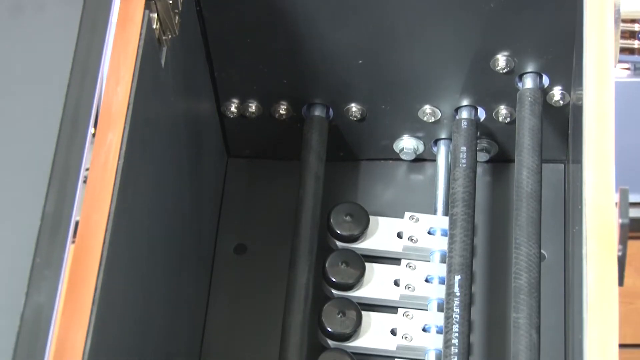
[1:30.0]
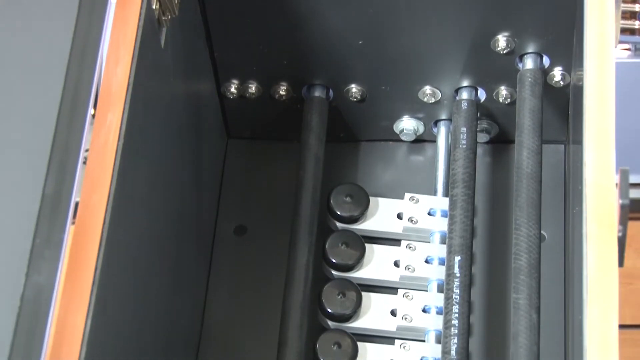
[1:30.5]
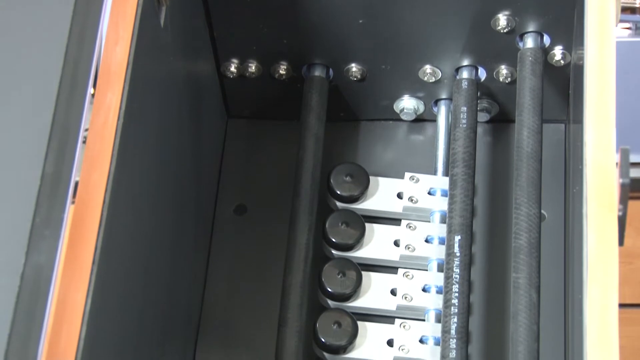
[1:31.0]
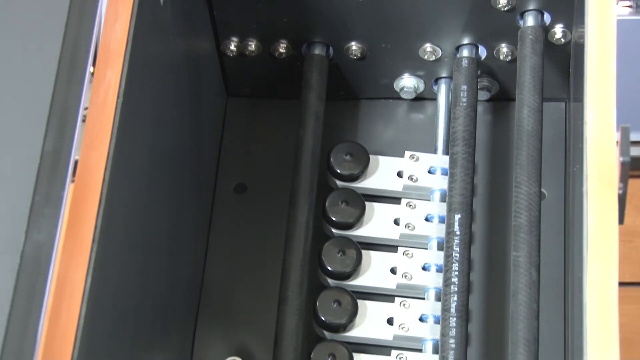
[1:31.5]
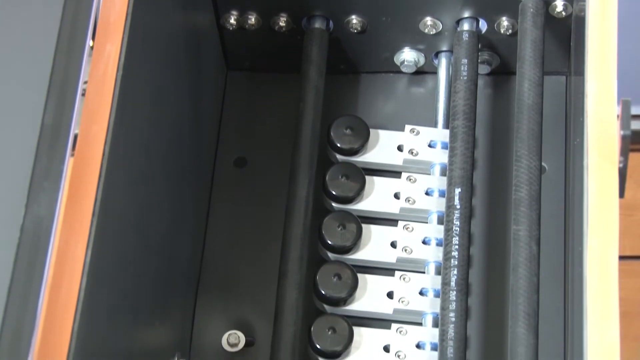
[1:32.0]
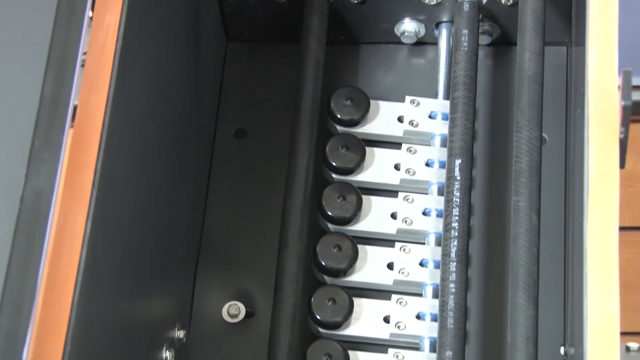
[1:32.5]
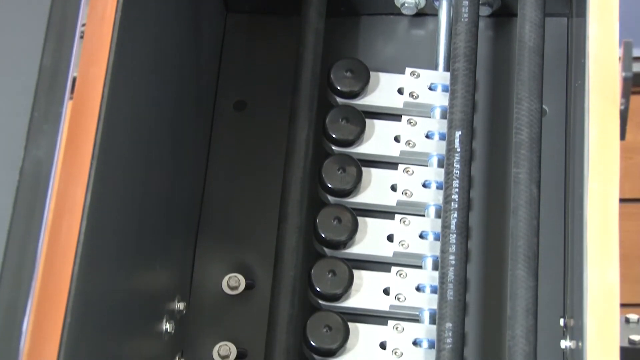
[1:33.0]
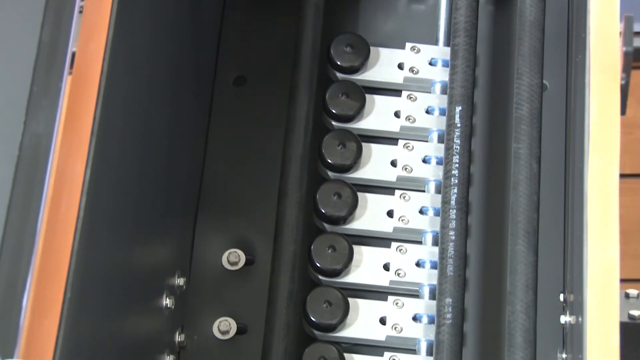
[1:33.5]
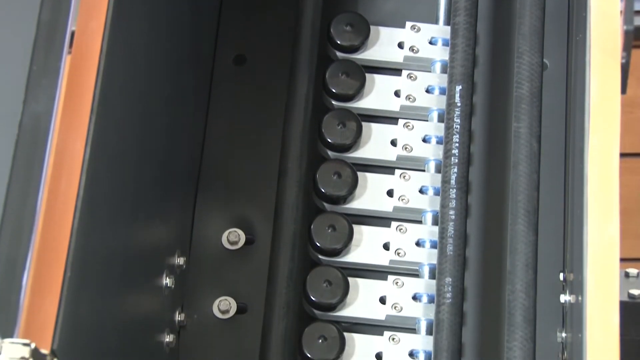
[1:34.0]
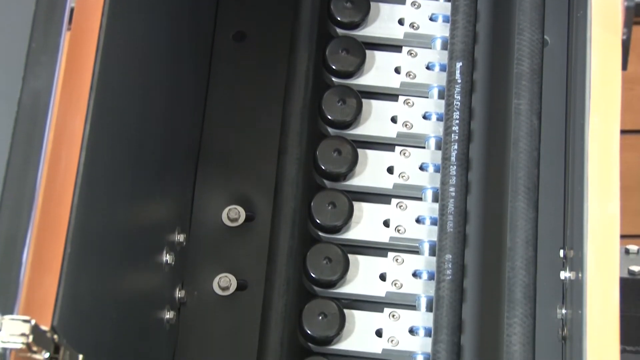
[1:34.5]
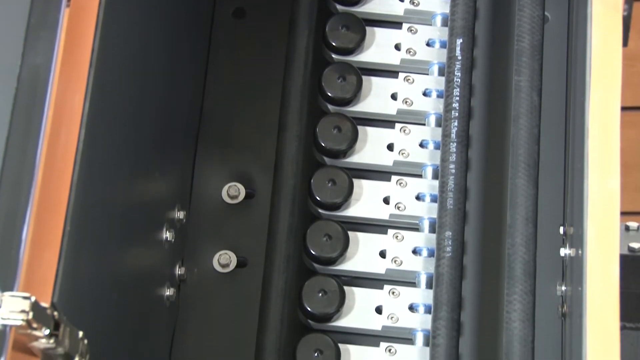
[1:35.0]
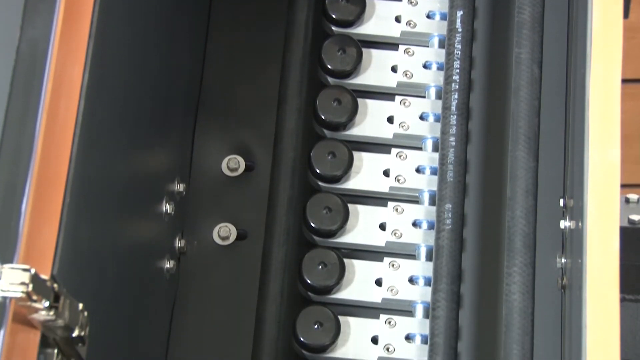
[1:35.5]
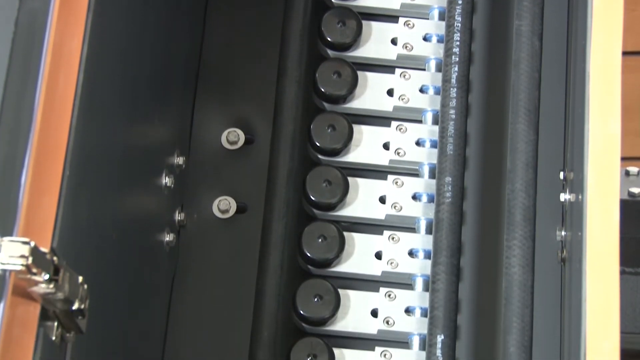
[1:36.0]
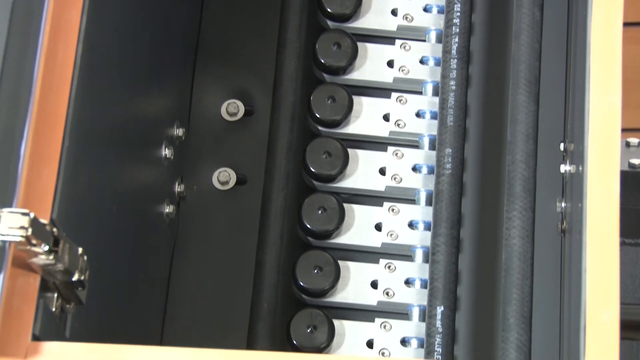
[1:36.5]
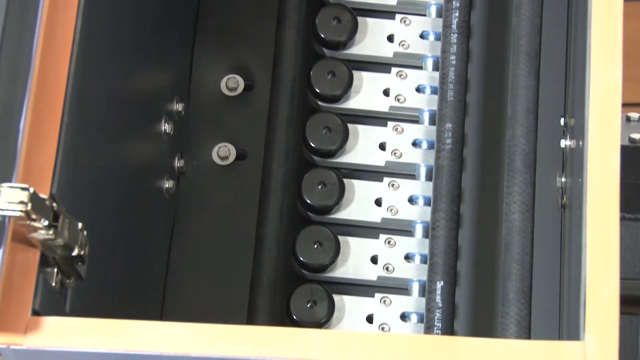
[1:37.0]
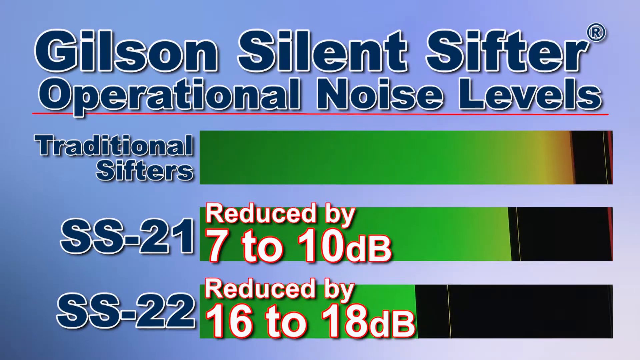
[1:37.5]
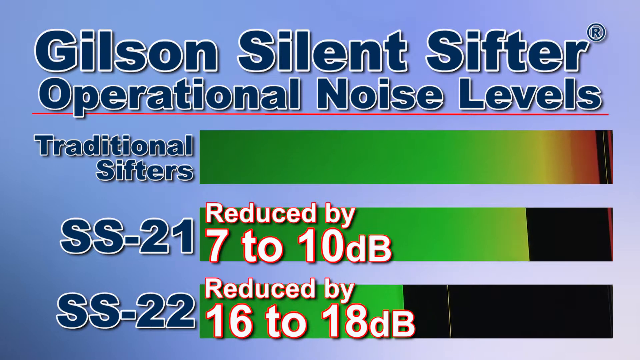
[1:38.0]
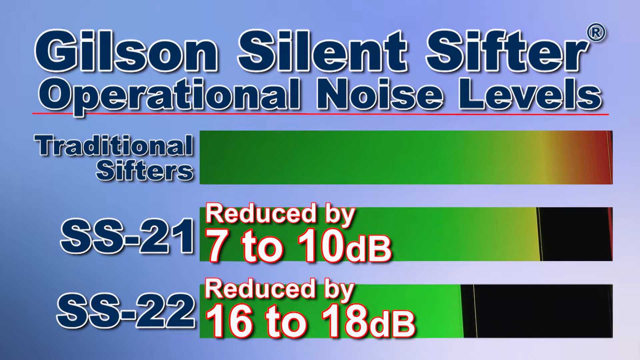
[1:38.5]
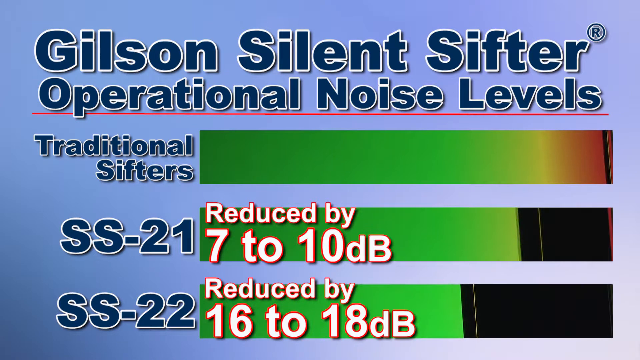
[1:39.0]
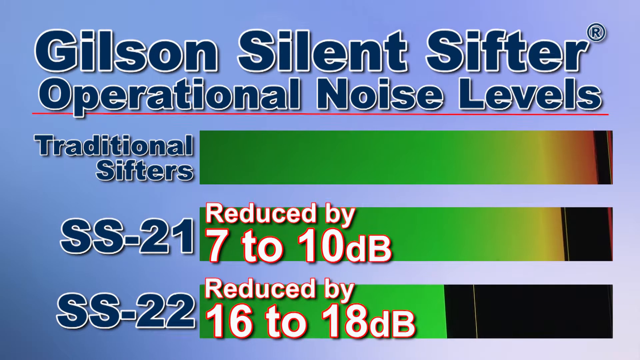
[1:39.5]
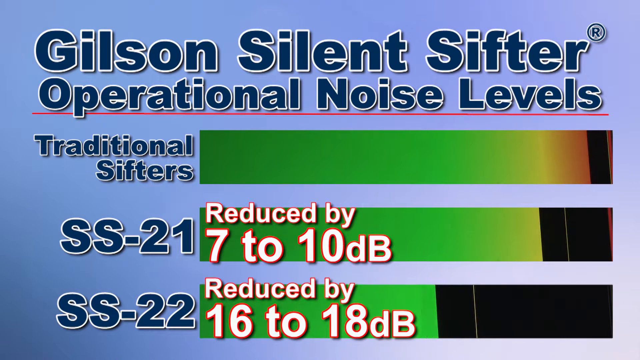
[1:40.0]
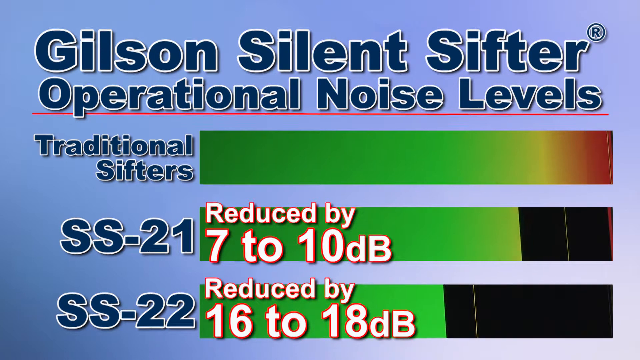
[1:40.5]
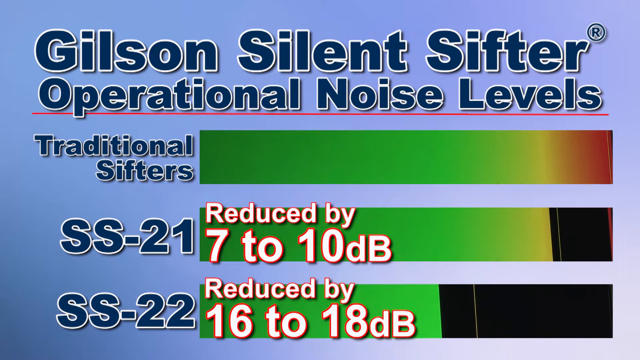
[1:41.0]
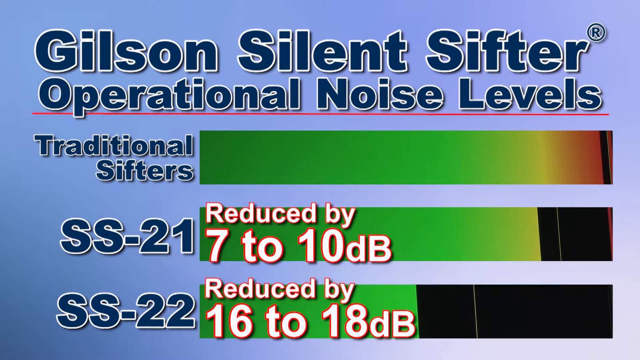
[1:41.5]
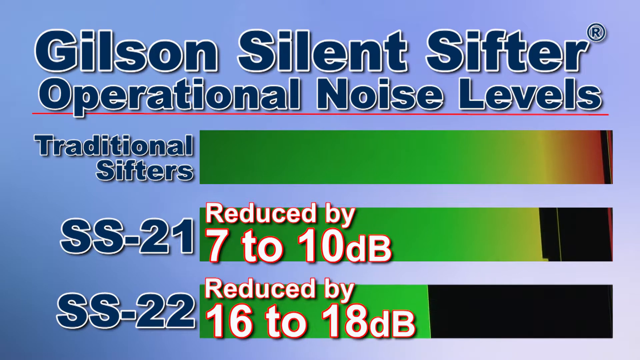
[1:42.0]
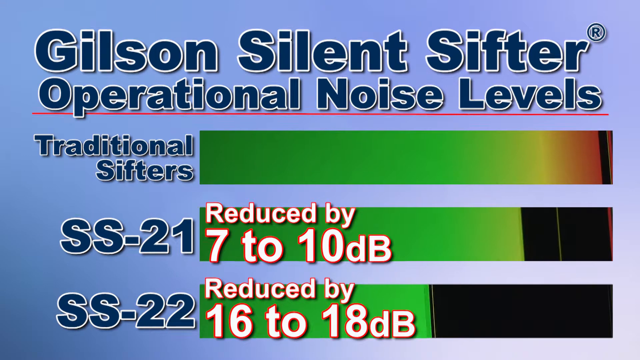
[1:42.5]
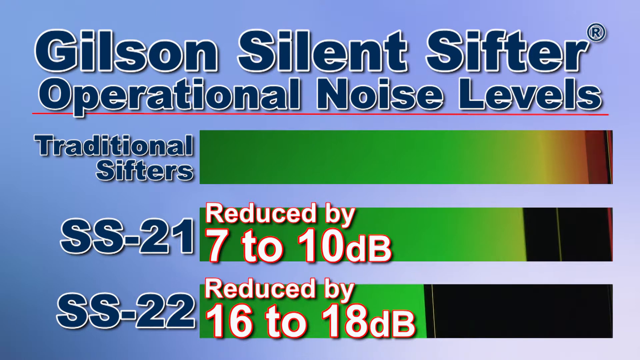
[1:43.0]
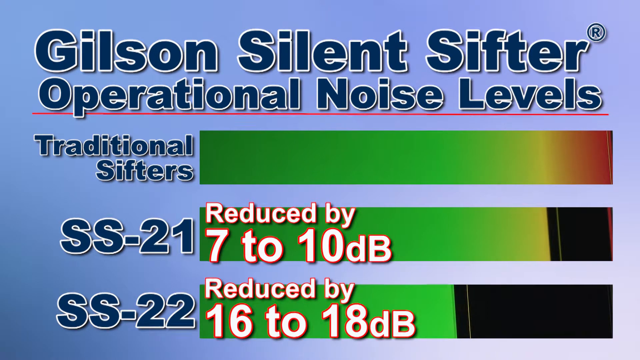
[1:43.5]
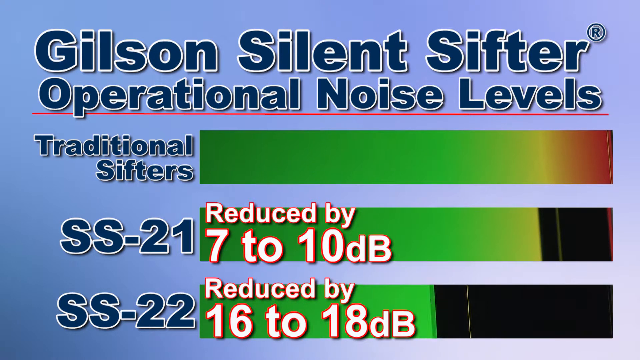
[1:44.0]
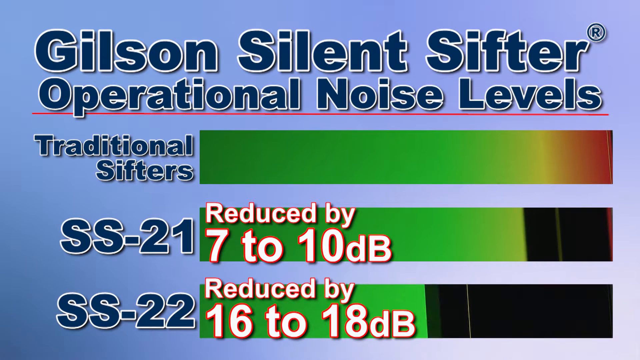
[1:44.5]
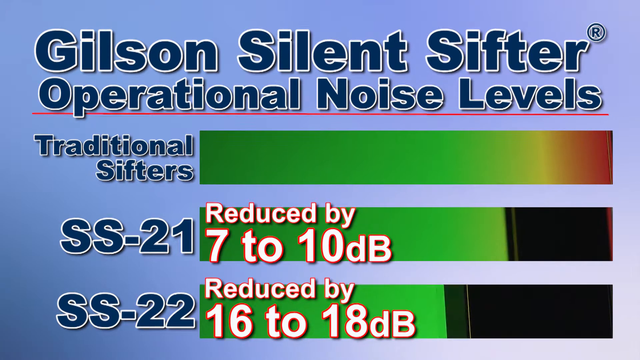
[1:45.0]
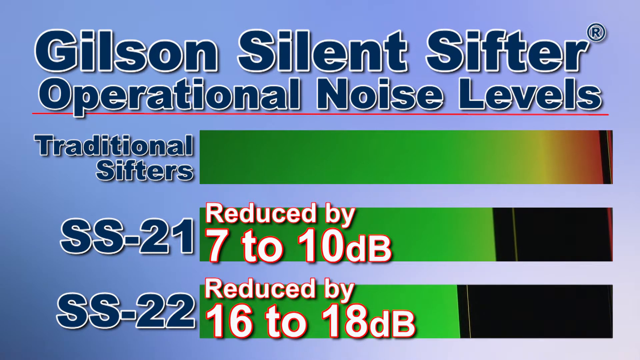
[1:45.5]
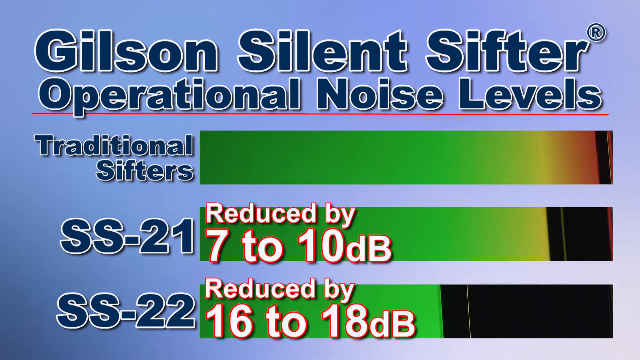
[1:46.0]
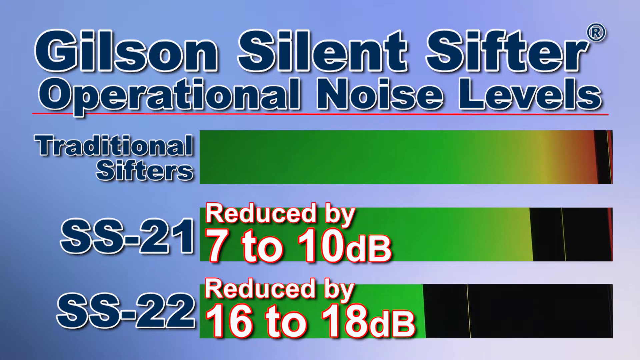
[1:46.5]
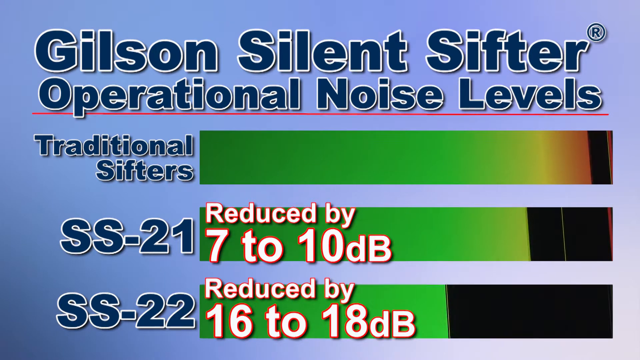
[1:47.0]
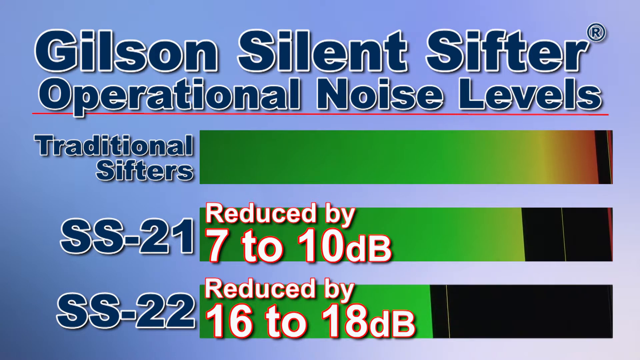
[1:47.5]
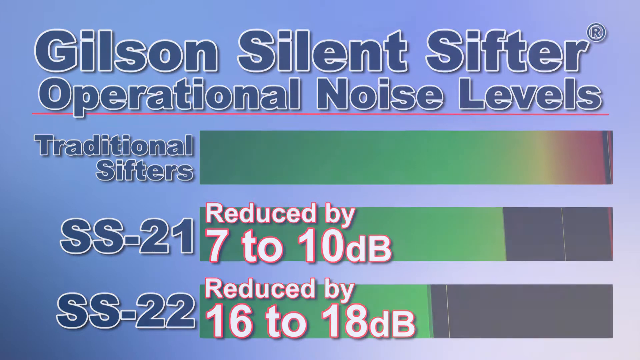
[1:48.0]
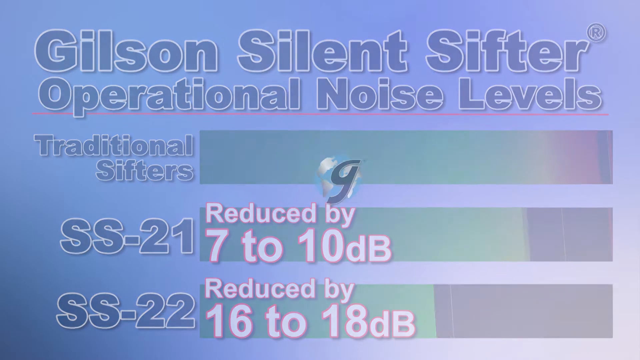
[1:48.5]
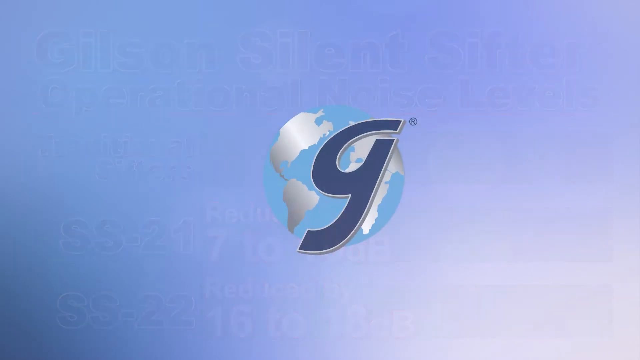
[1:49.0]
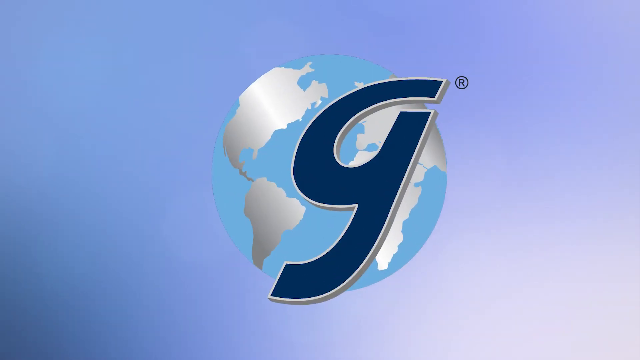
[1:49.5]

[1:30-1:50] Some steel pieces are shown together. Then the Gilson Silent Sifter operational noise levels are shown.